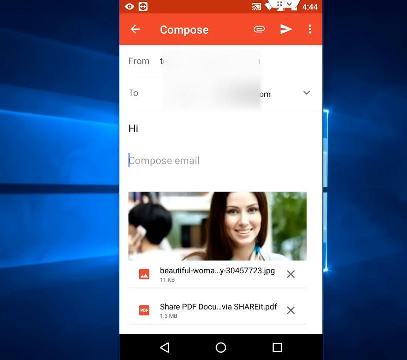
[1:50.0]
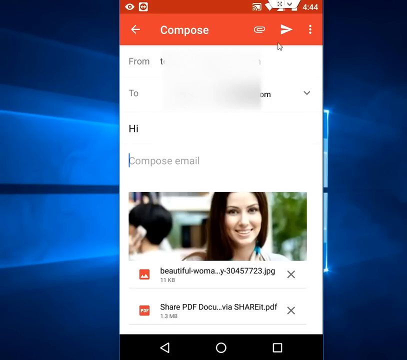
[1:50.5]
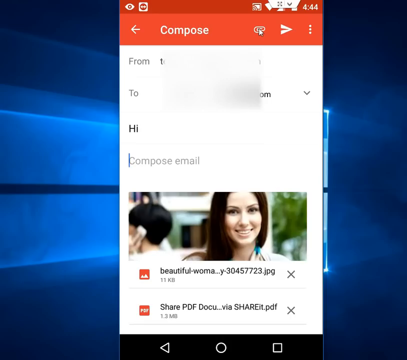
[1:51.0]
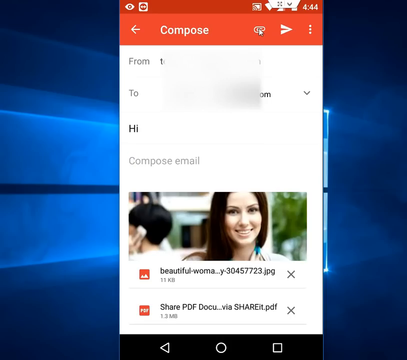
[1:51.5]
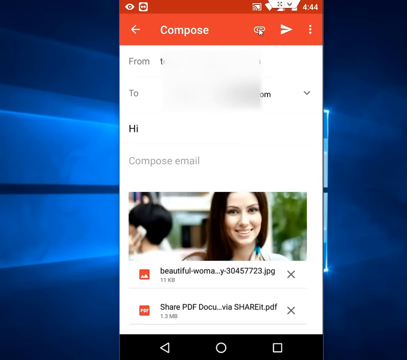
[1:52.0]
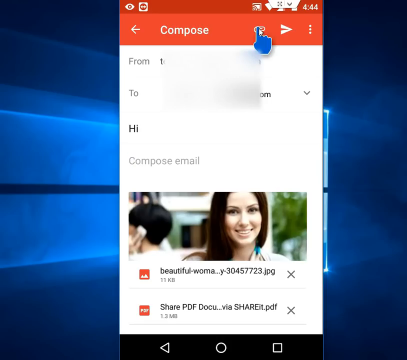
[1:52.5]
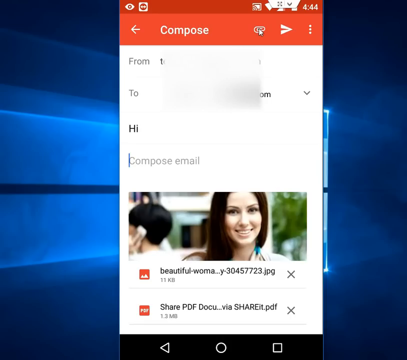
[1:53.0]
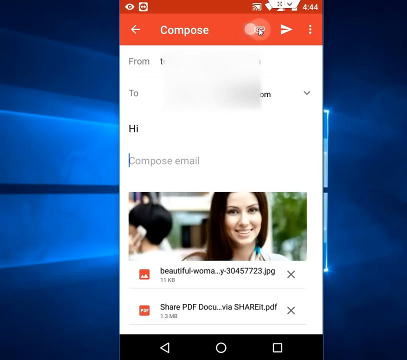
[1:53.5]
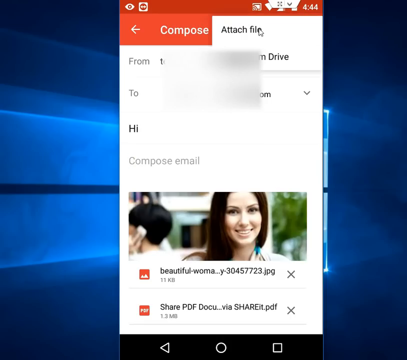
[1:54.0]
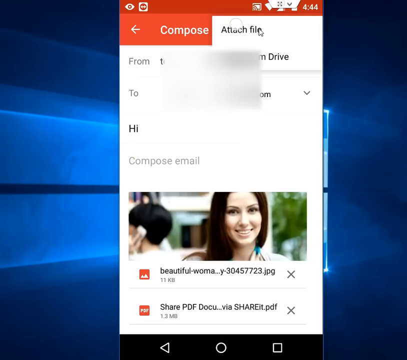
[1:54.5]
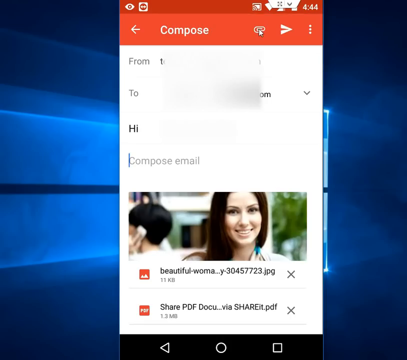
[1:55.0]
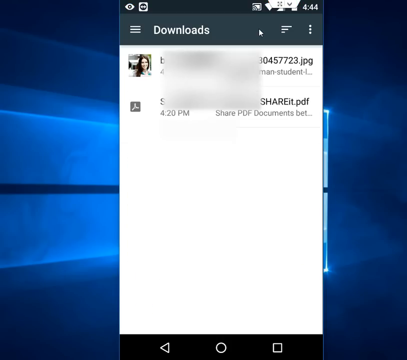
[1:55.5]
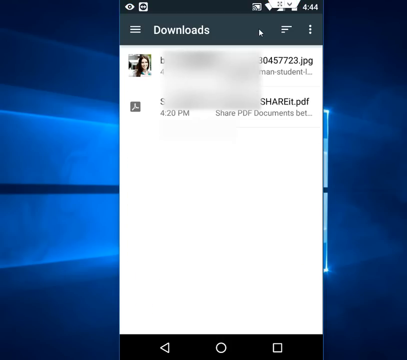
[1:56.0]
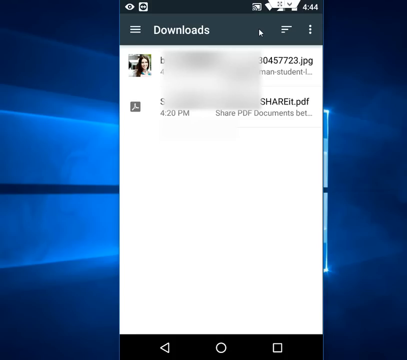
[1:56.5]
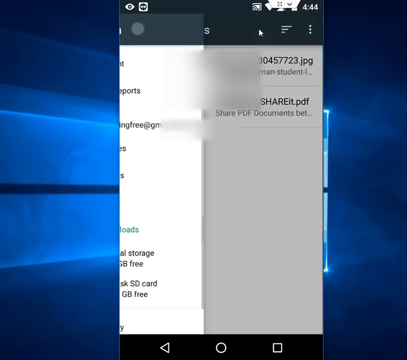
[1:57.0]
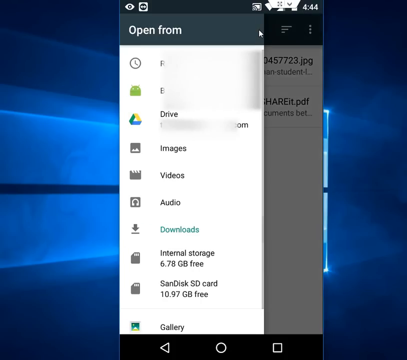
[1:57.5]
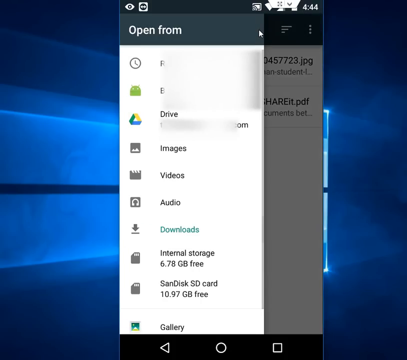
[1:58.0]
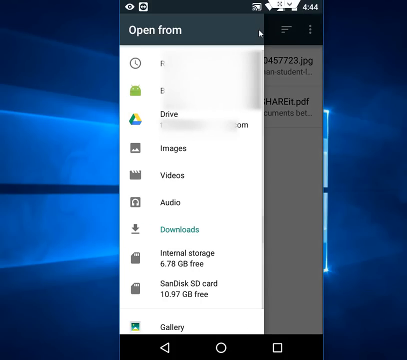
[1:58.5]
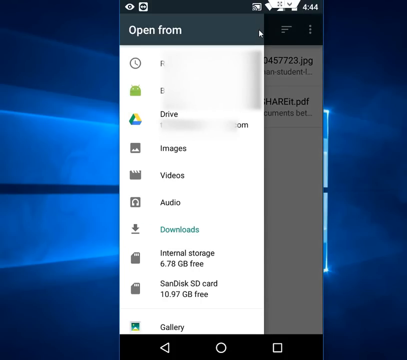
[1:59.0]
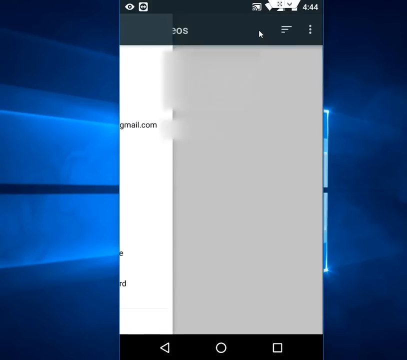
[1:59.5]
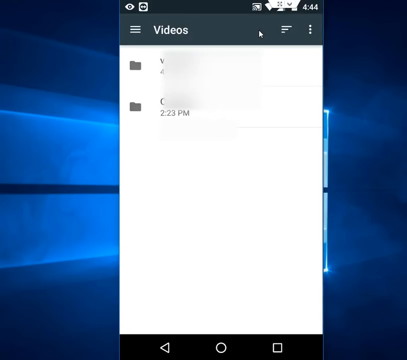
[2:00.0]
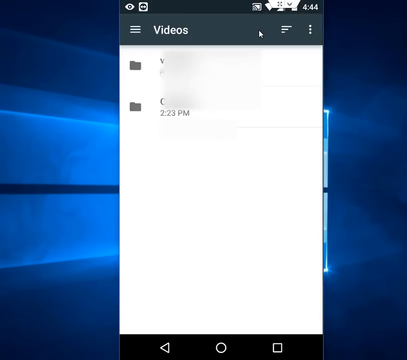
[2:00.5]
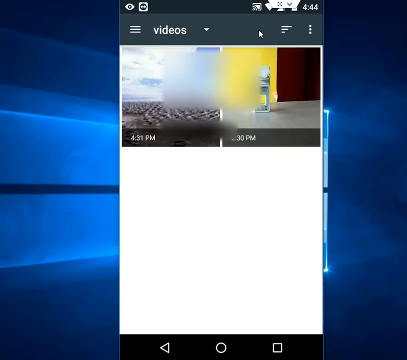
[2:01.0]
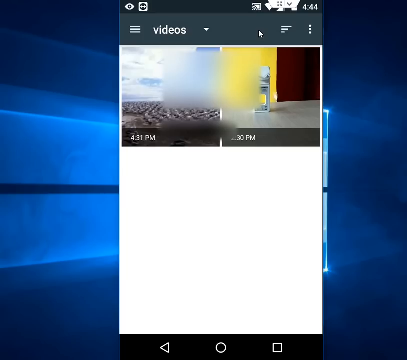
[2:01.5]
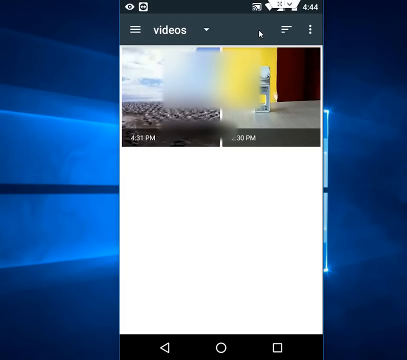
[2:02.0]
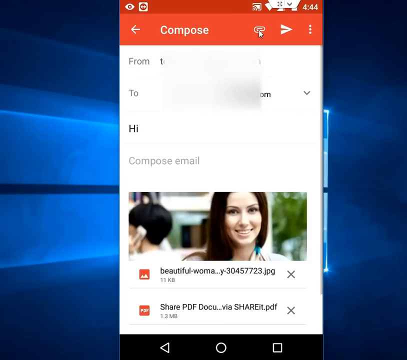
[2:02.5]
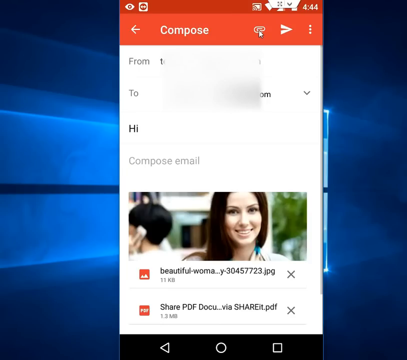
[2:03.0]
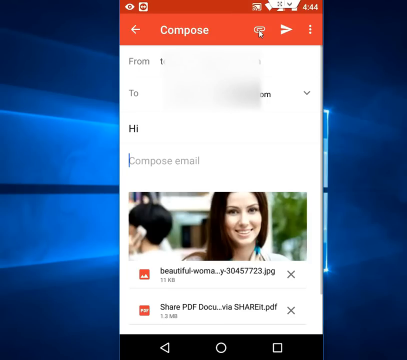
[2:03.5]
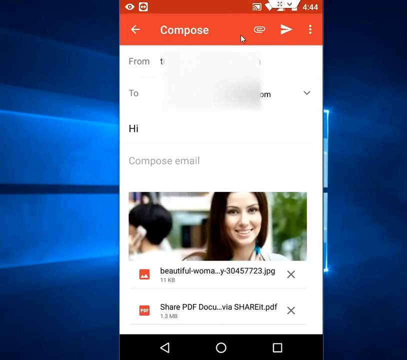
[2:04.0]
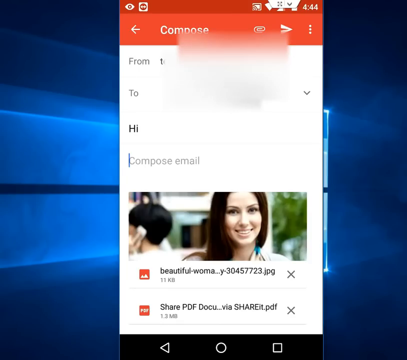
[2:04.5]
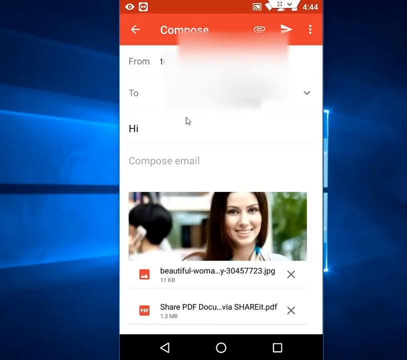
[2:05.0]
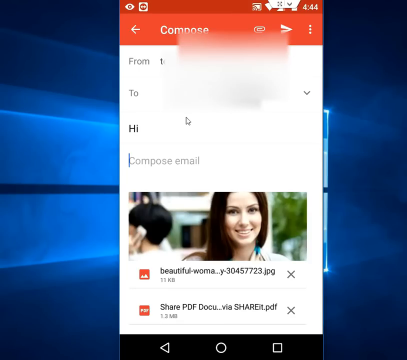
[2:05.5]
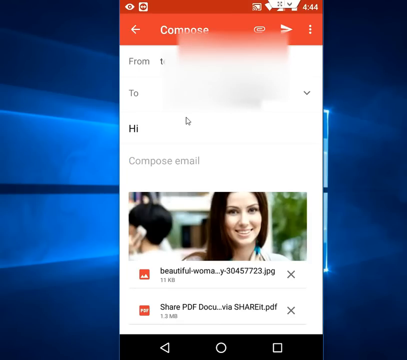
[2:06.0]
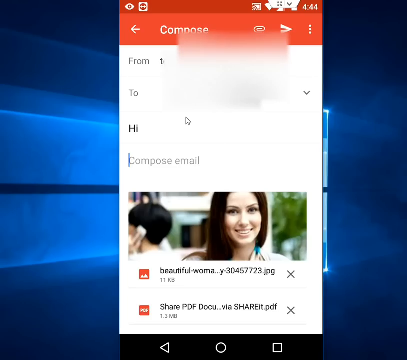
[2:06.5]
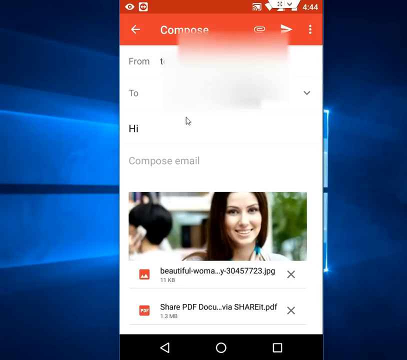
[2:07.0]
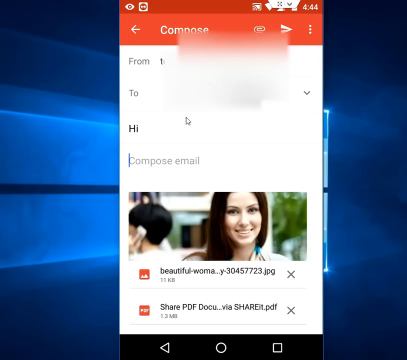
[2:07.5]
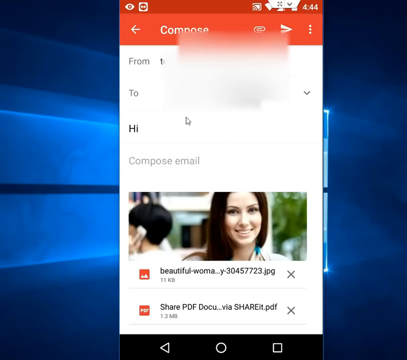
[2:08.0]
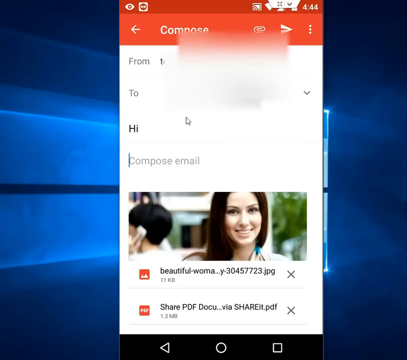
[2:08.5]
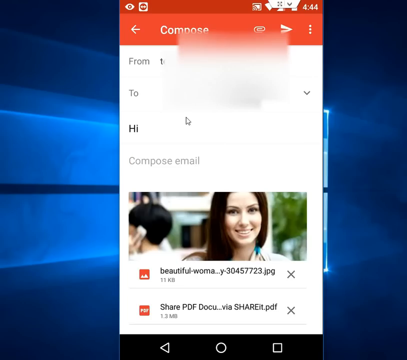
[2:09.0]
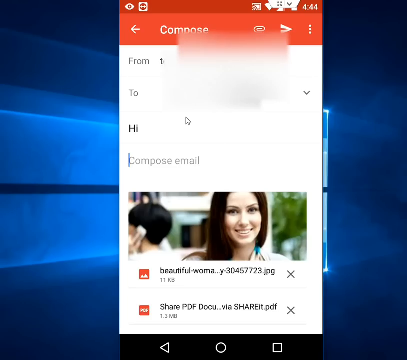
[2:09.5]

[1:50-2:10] A picture shows a woman with a gentleman standing beside her, seen in profile from his left side, holding a phone to his left ear. The view scrolls through different images, showing the picture of the woman as a JPEG. Entries for "share.pdf" appear, with Xs on the right side of both entries. On the left, a square picture icon appears next to the JPEG, and a PDF icon is to the left of the share PDF entry. The attached files are shown, and files to attach are chosen. A picture on the left is of an ocean and looks like sand with a lot of feet. Another picture shows the chair with a yellow wall.